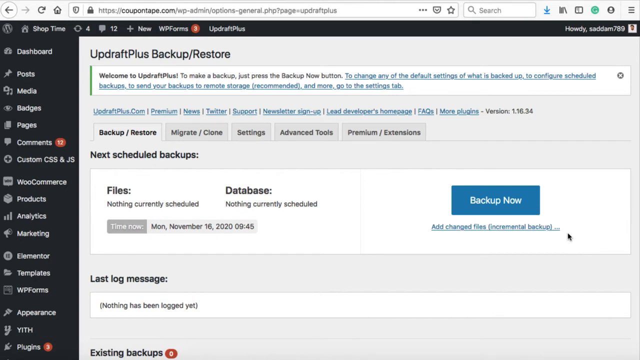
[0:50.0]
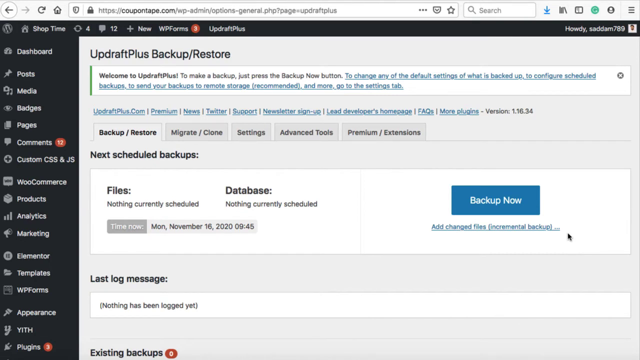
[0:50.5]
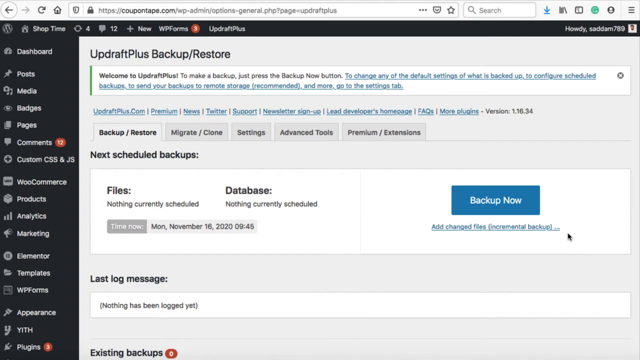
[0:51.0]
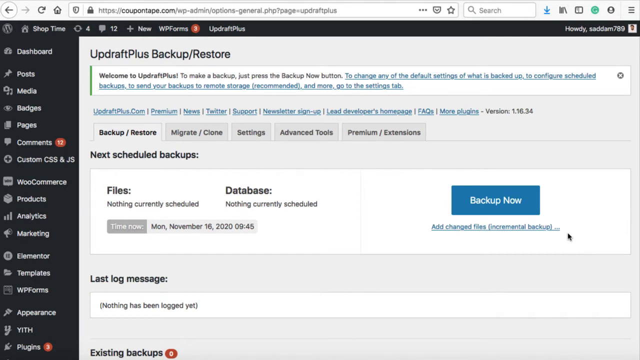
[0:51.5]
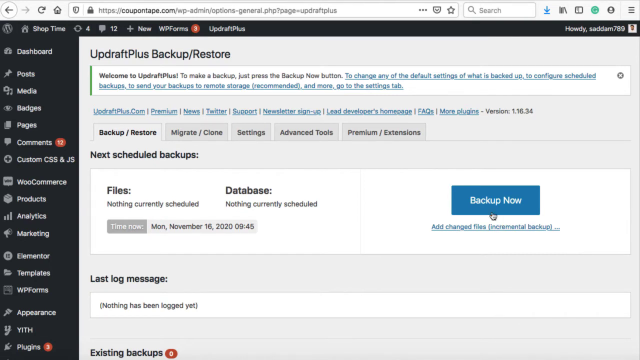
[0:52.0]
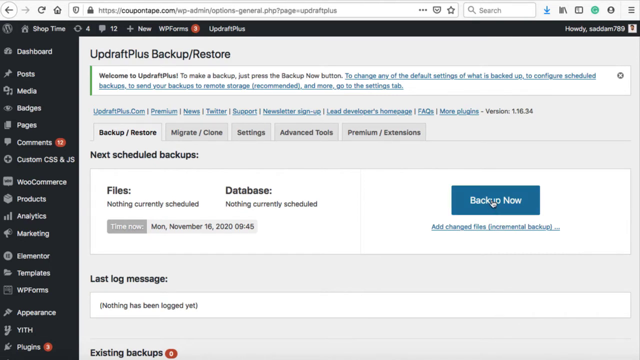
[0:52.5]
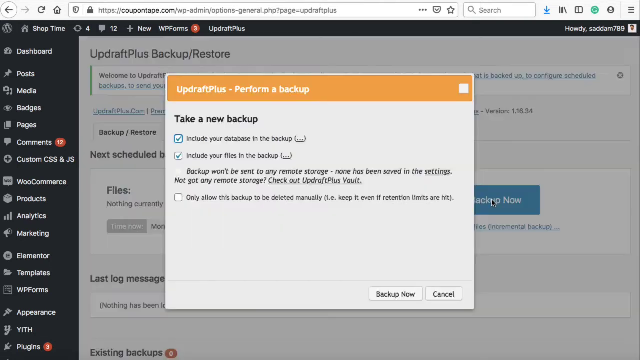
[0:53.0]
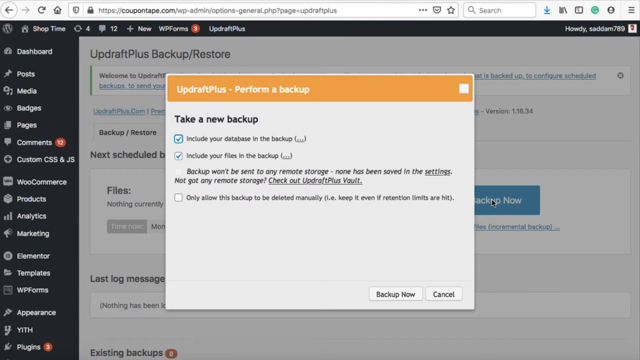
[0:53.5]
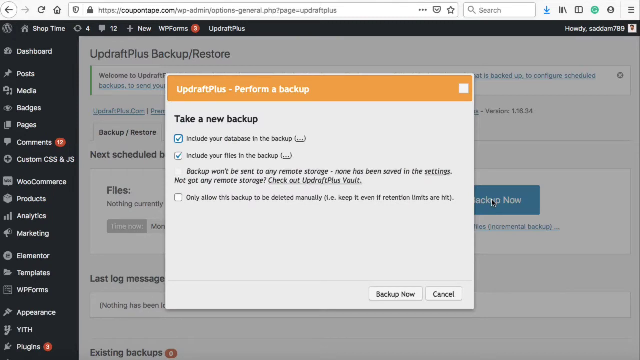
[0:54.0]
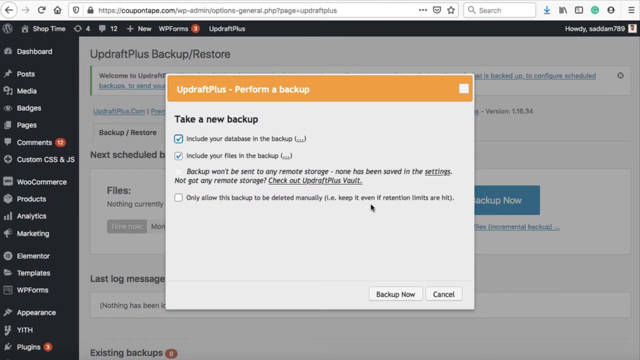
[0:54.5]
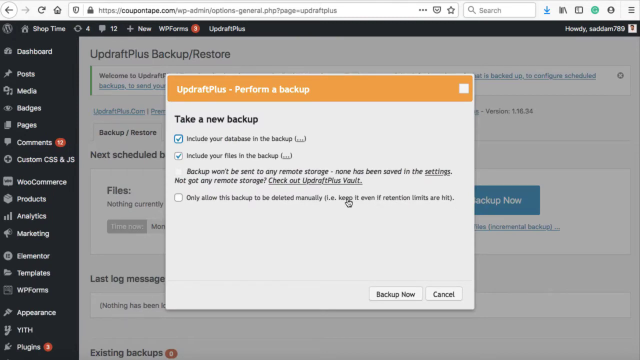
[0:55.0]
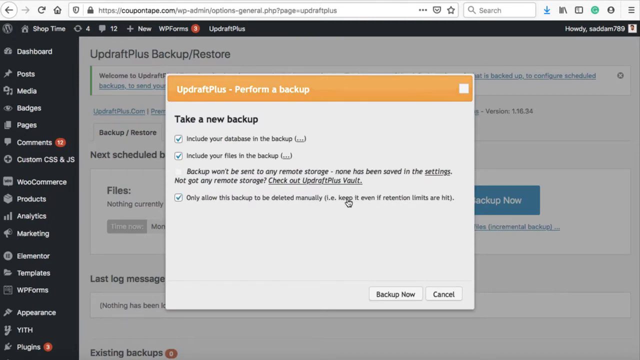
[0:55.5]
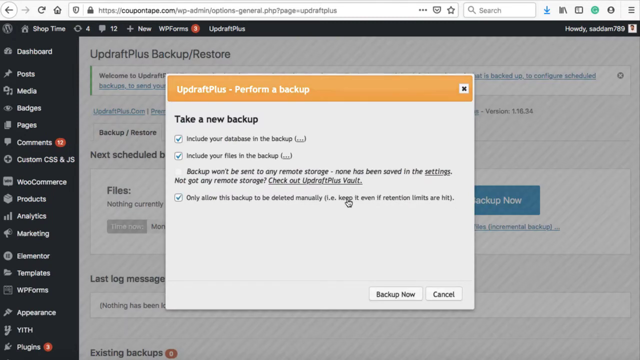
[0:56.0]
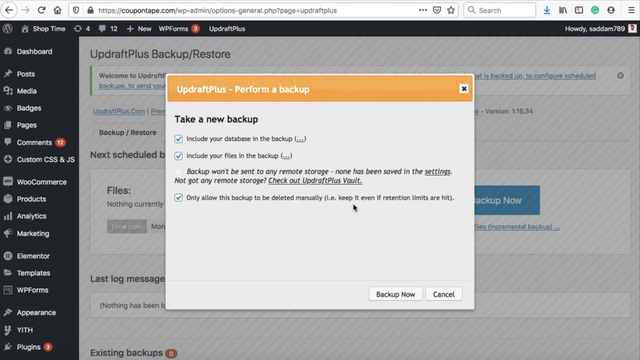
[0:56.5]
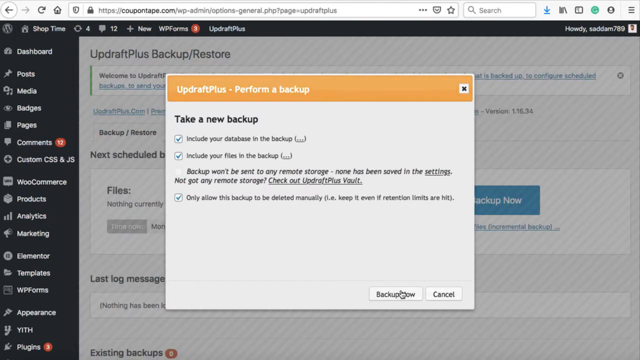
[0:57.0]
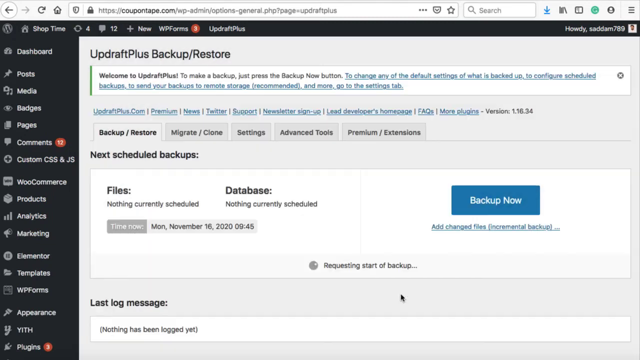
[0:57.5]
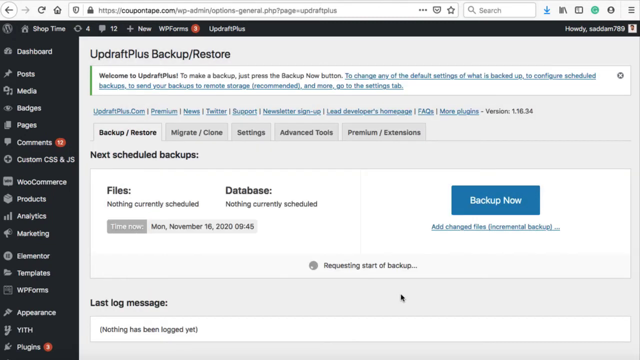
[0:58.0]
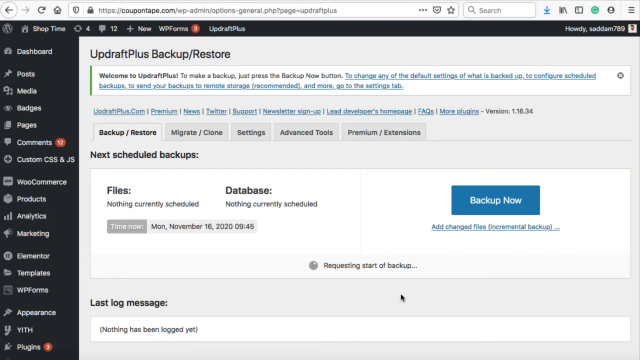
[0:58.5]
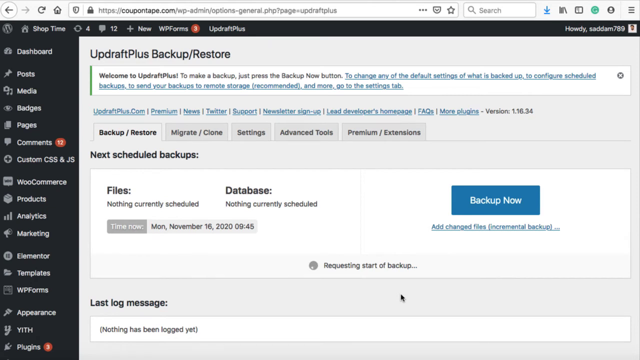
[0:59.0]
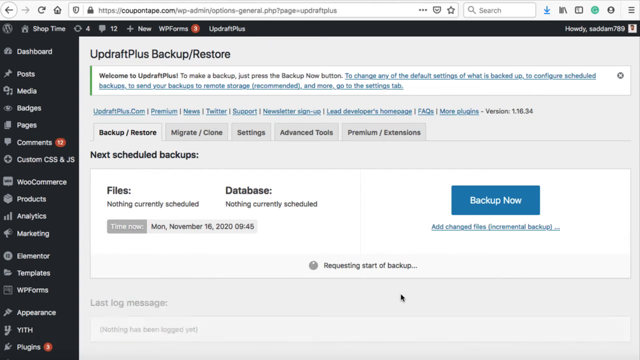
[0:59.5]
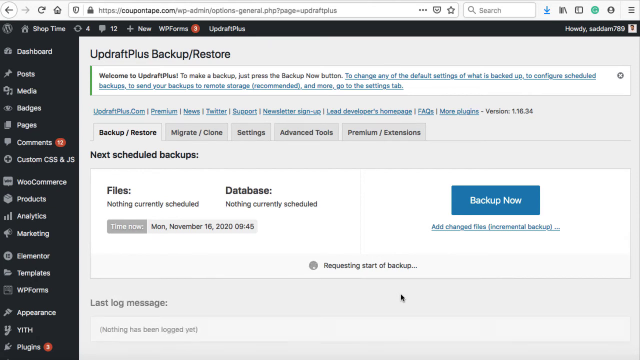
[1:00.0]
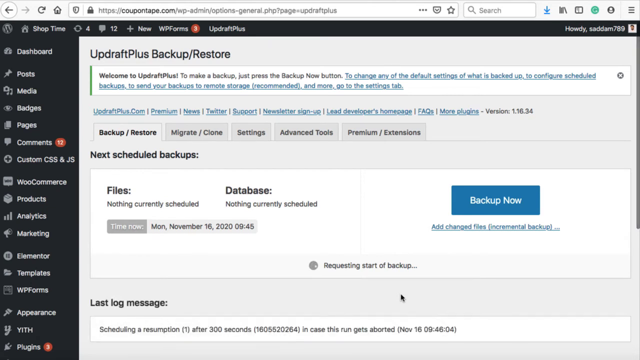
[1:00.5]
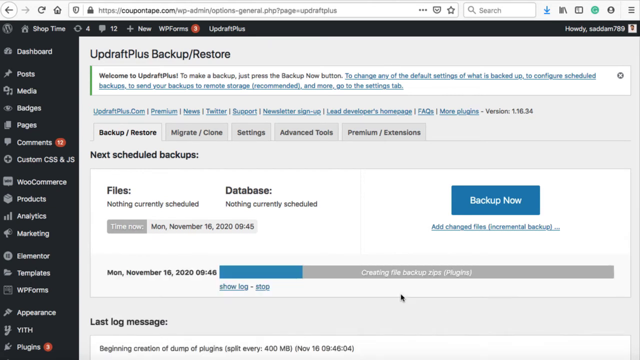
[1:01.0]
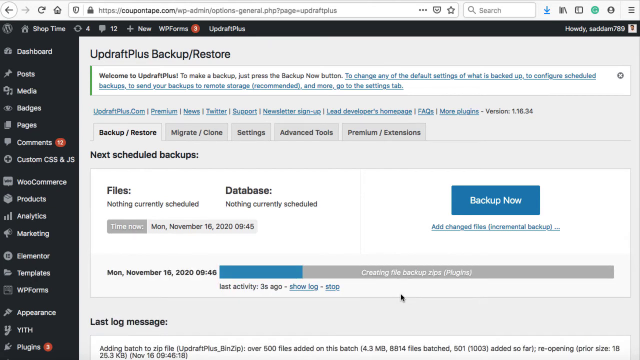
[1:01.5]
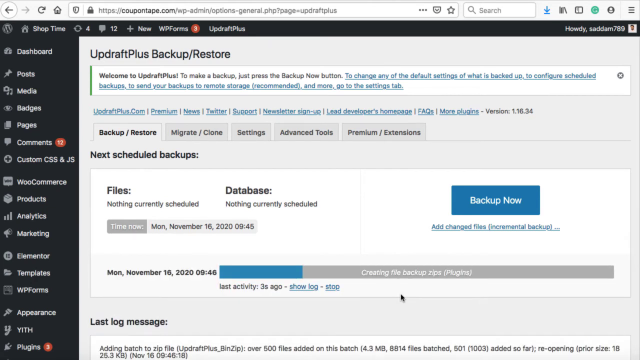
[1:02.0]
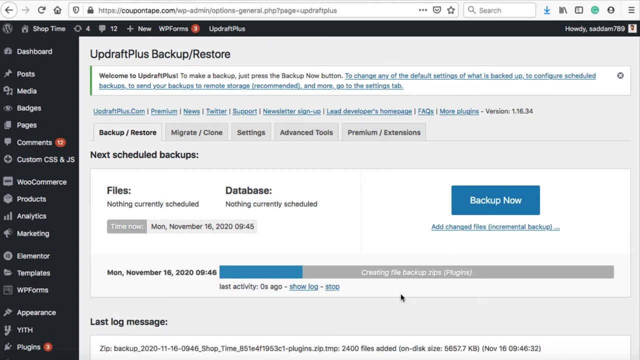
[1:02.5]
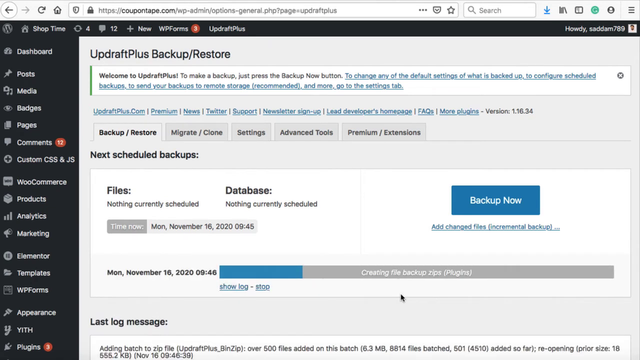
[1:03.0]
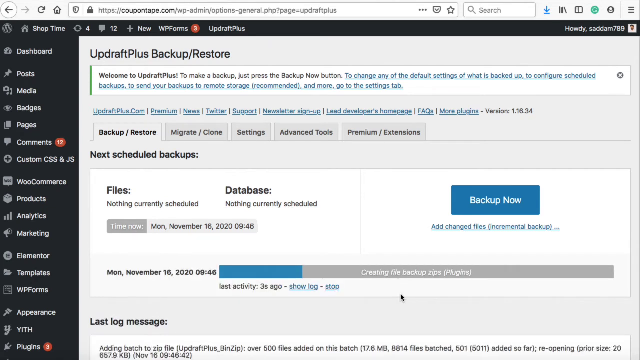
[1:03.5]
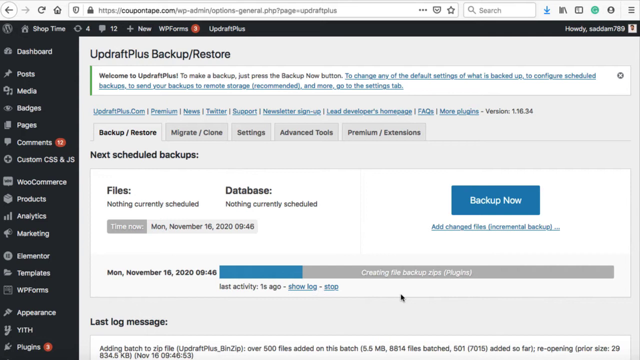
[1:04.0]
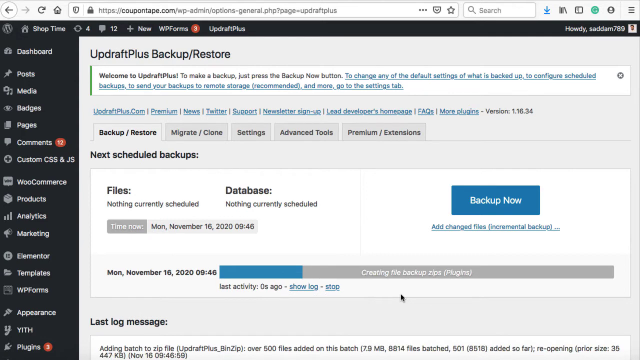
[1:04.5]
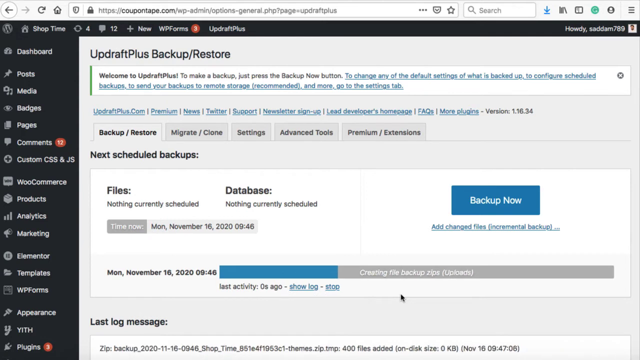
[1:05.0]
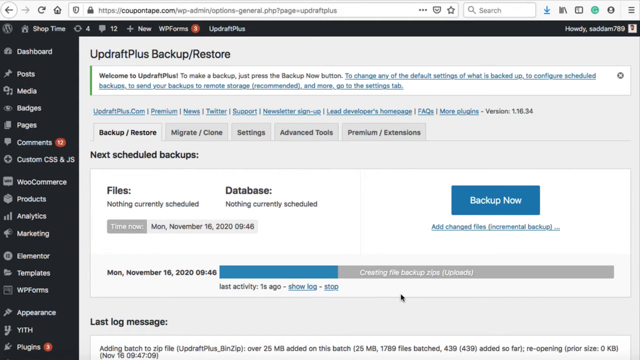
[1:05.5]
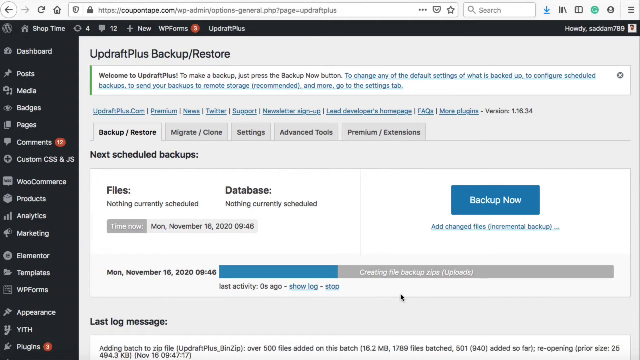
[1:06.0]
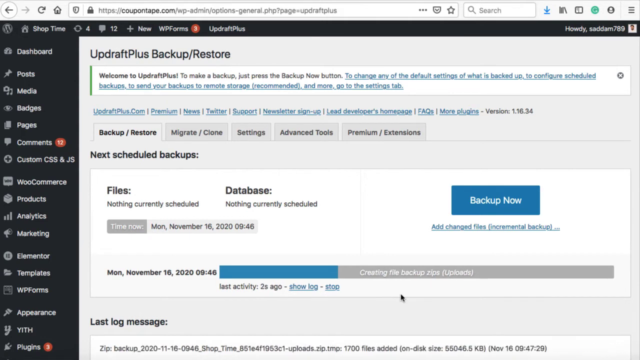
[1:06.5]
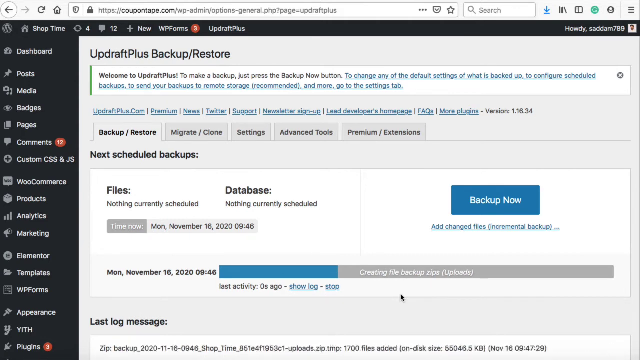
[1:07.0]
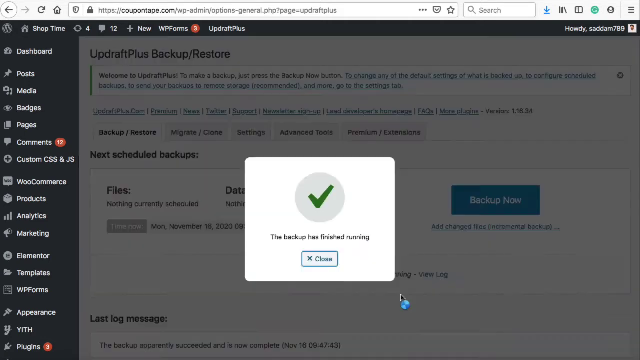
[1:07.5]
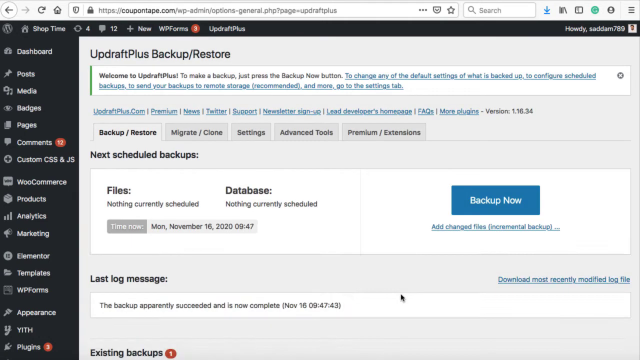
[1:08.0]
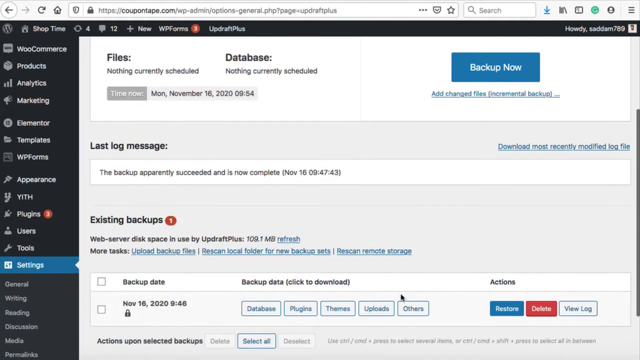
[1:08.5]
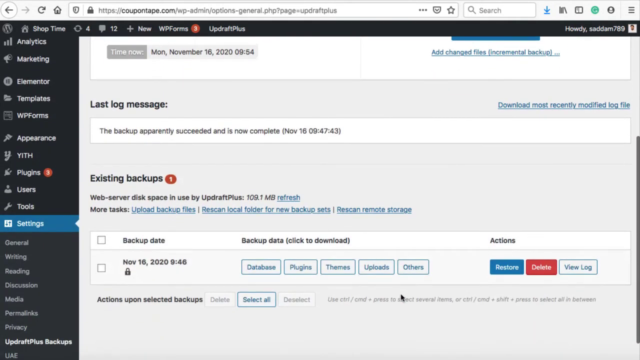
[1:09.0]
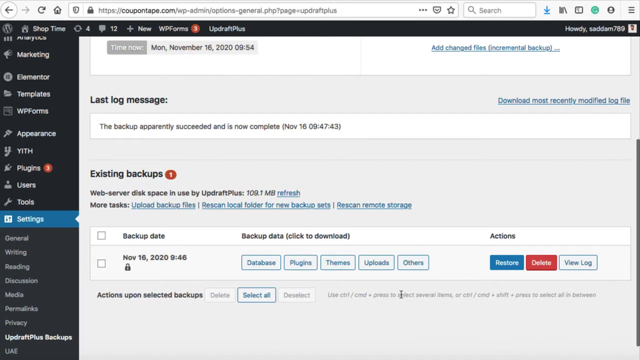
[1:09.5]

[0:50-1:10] A page titled "Updraft Plus Backup Restore" is shown with black text at the top. It says "Next Scheduled Backups," with no backups scheduled yet, and a blue button with white text says "Backup Now." The cursor hovers over it and then clicks "Backup Now." A window appears with "Updraft Plus Perform Backup" in white text over an orange bar, and the window says "Take a New Backup" with checkbox options; the first two are checked. The cursor checks the third option too and clicks "Backup Now." The text "Requesting Startup Backup" appears, followed by a loading bar that is gray with the loaded part in blue. A date is shown to the left along with "Last Activity." A box then appears saying the backup is completed. The page has a white and gray background, with mostly black text and some links in blue; it appears to be a WordPress dashboard. On the left is a sidebar, either black or dark blue, with white text and links including dashboard, posts, media, badges, pages, and comments. Next to comments is a small red notification with white numbers too small to make out, and there are more options such as products, analytics, marketing, and templates.